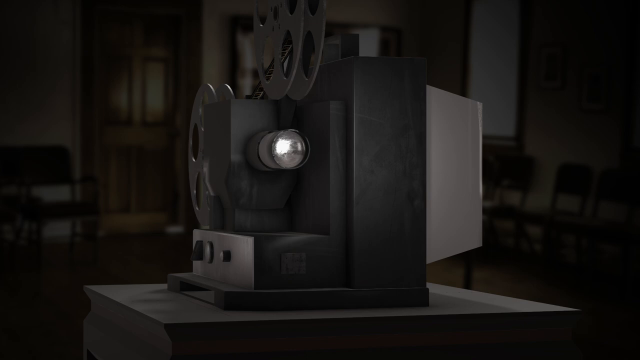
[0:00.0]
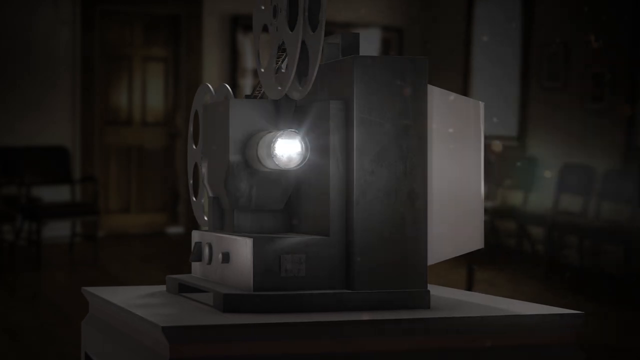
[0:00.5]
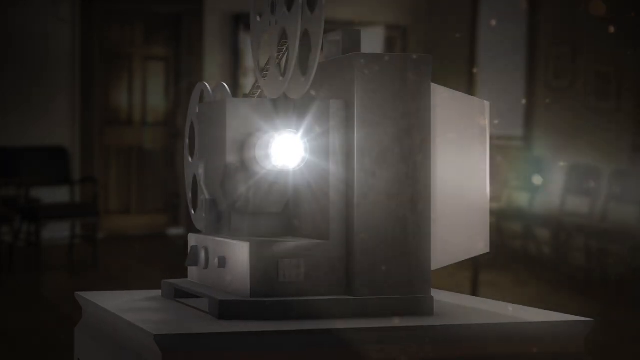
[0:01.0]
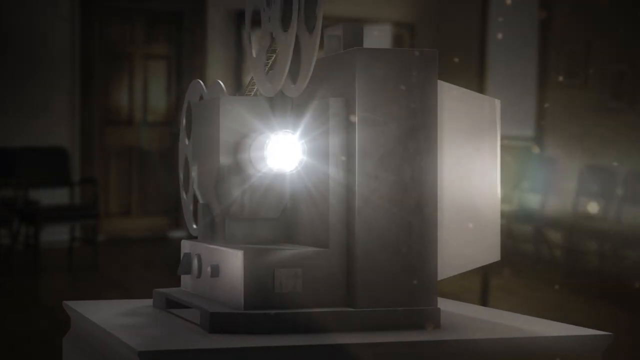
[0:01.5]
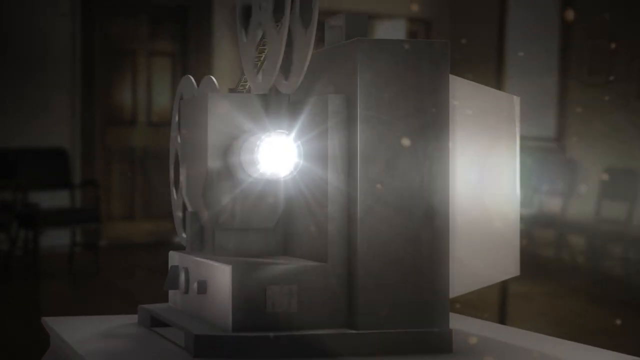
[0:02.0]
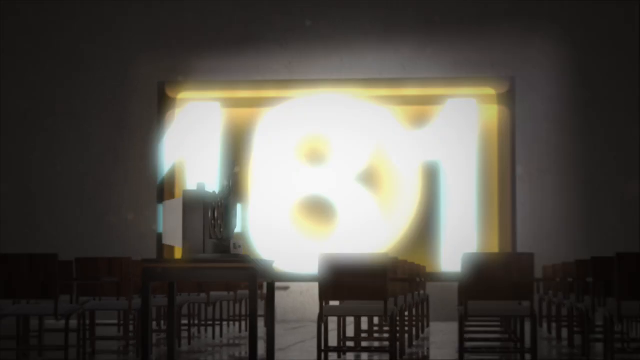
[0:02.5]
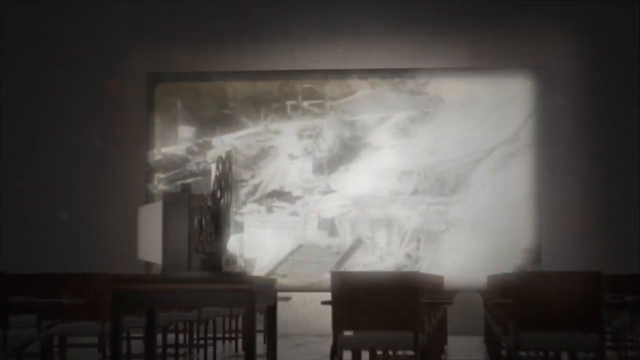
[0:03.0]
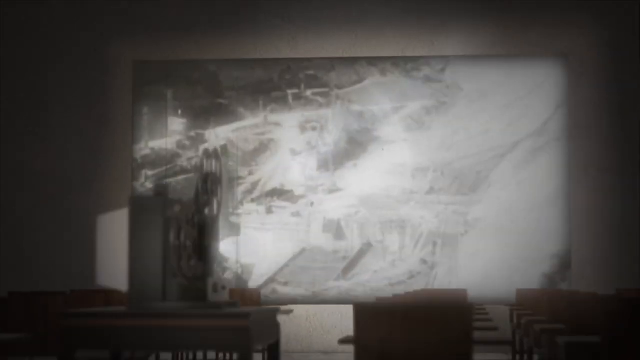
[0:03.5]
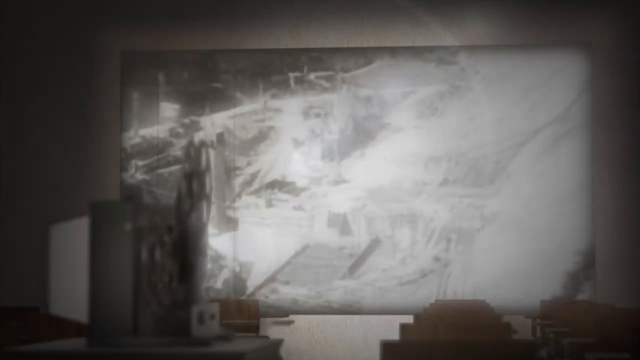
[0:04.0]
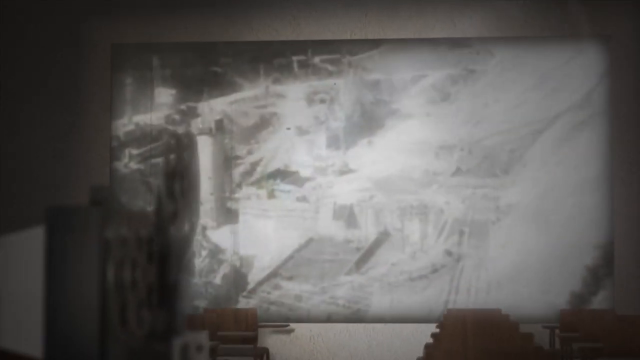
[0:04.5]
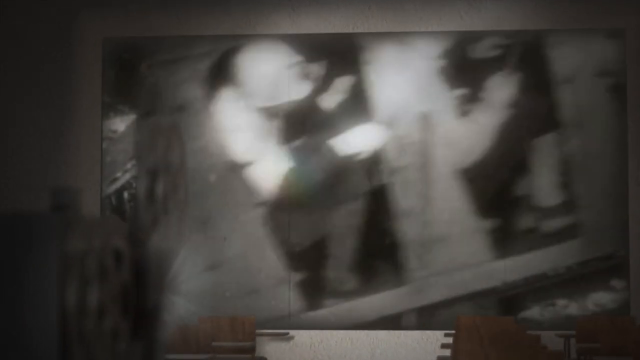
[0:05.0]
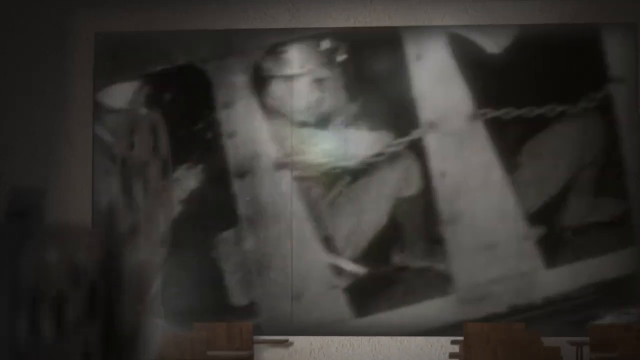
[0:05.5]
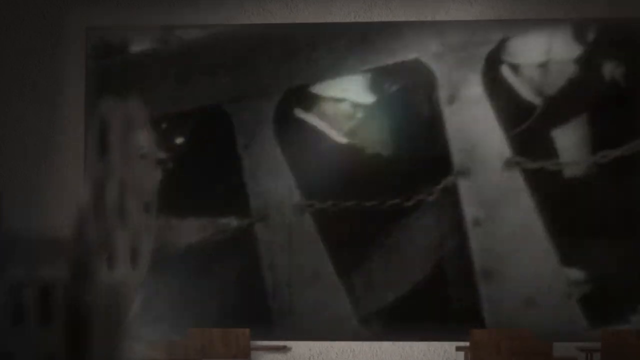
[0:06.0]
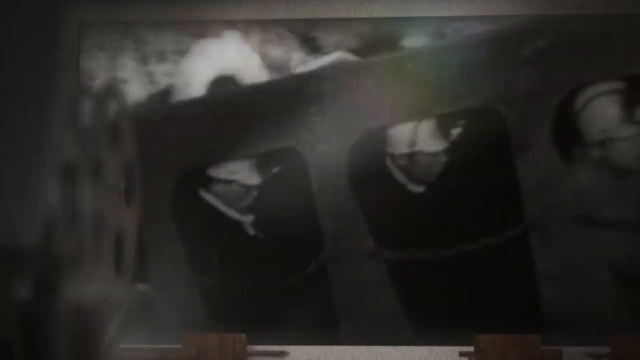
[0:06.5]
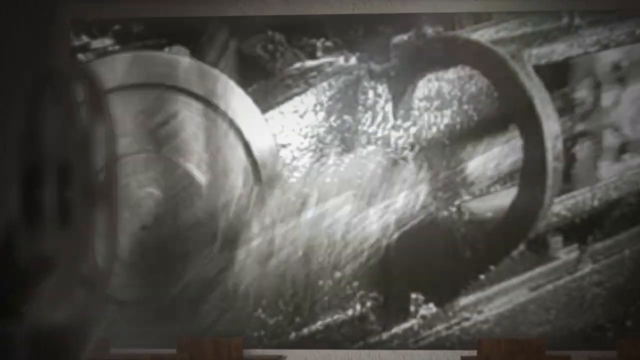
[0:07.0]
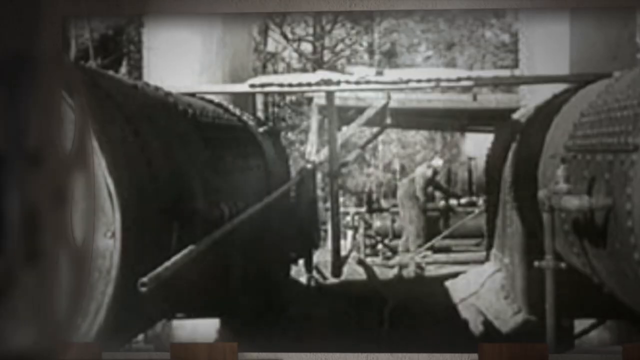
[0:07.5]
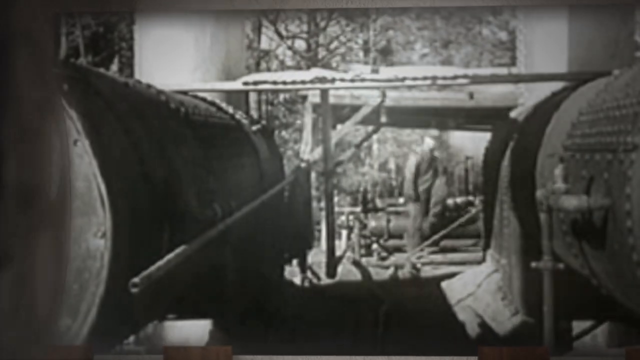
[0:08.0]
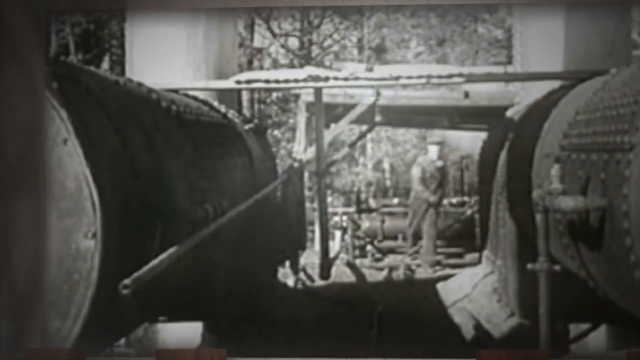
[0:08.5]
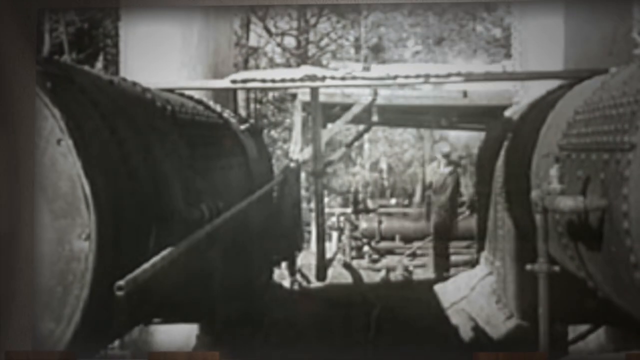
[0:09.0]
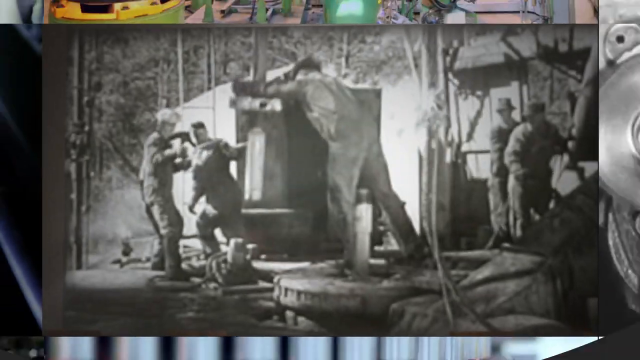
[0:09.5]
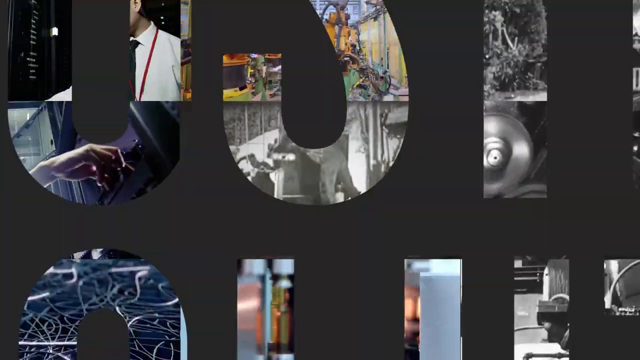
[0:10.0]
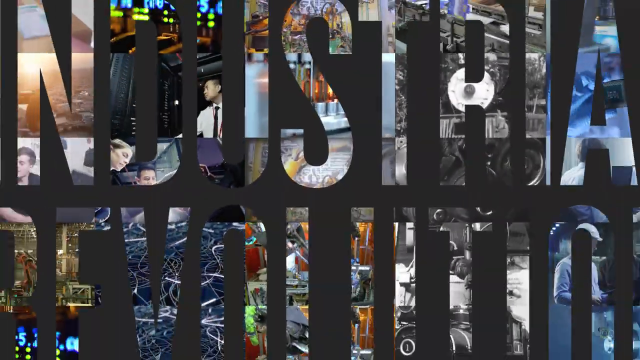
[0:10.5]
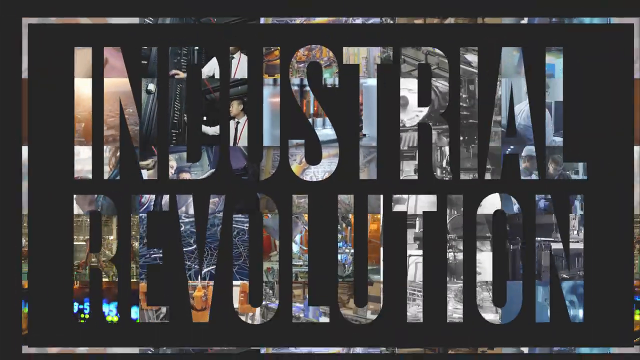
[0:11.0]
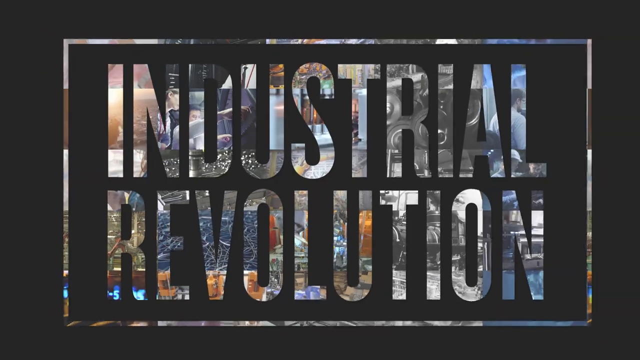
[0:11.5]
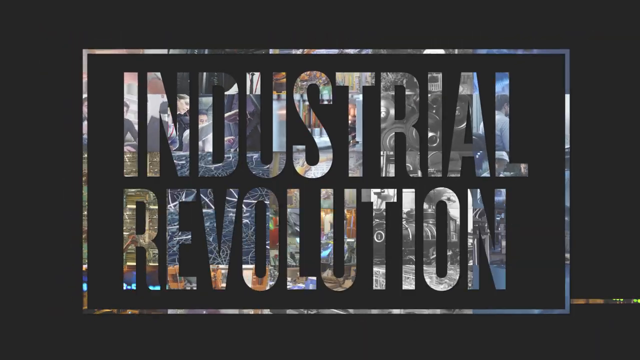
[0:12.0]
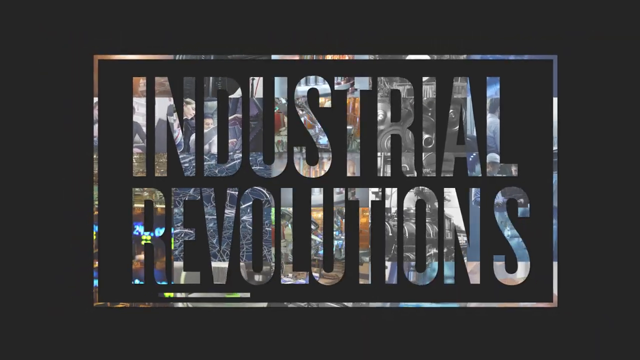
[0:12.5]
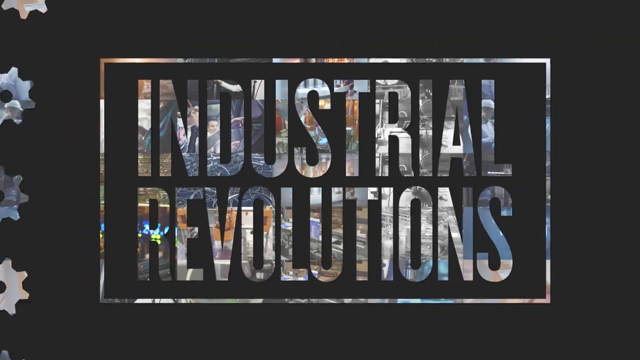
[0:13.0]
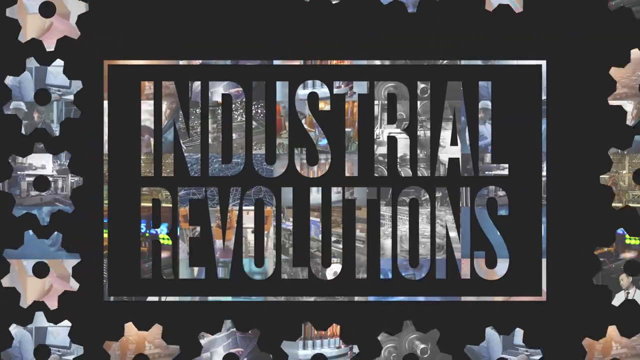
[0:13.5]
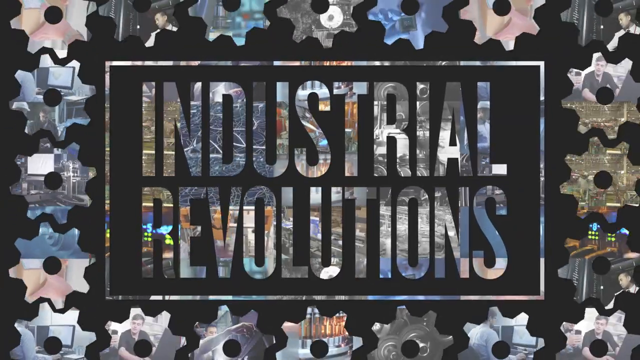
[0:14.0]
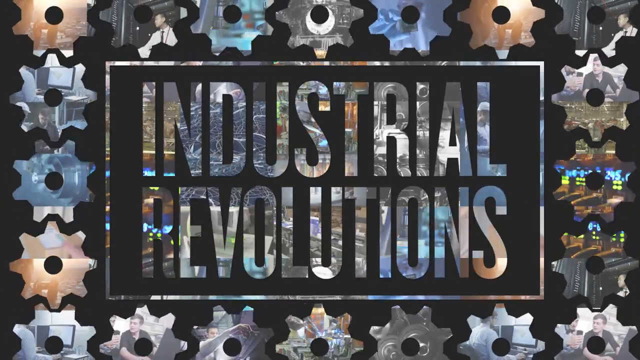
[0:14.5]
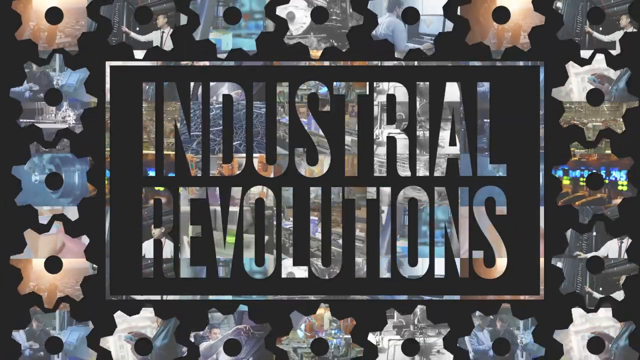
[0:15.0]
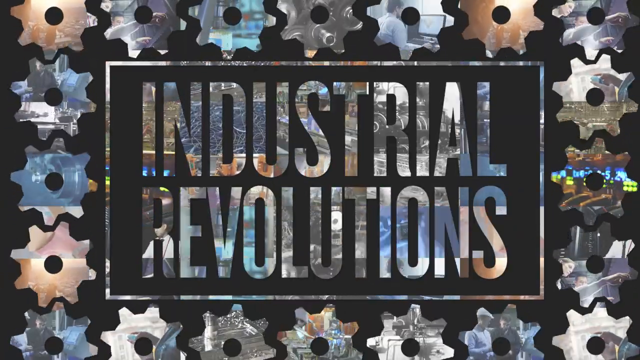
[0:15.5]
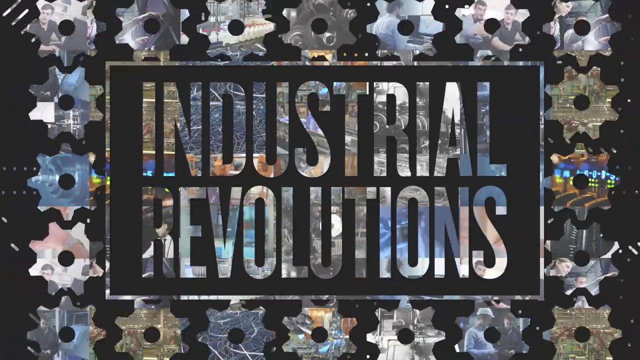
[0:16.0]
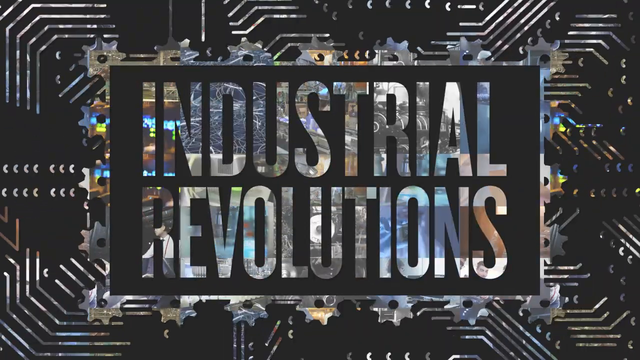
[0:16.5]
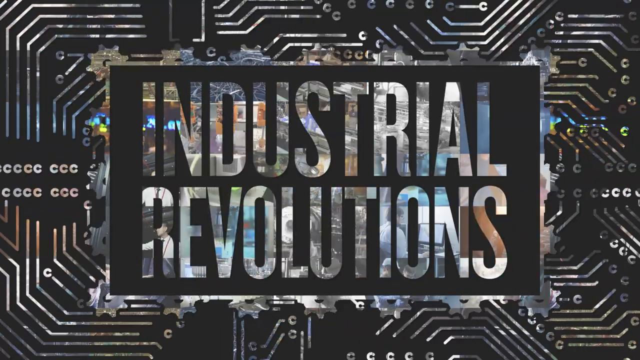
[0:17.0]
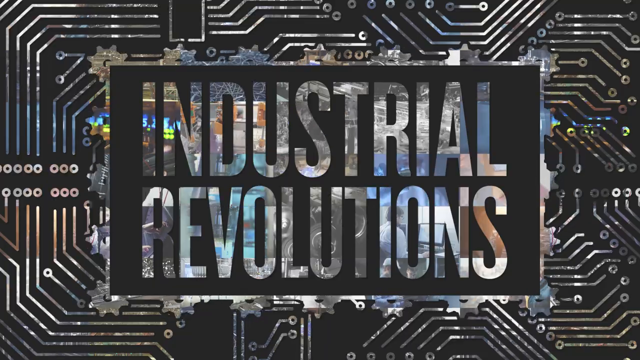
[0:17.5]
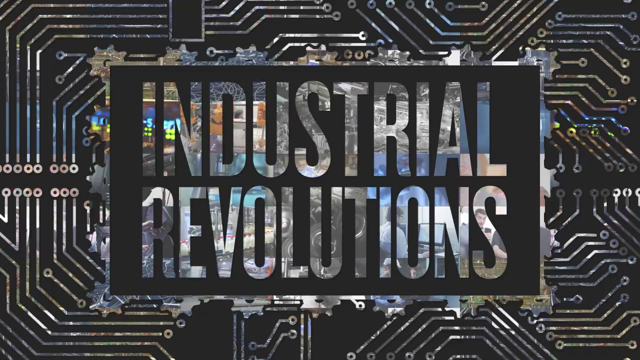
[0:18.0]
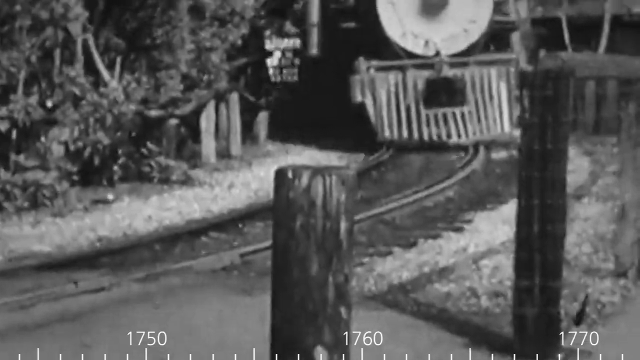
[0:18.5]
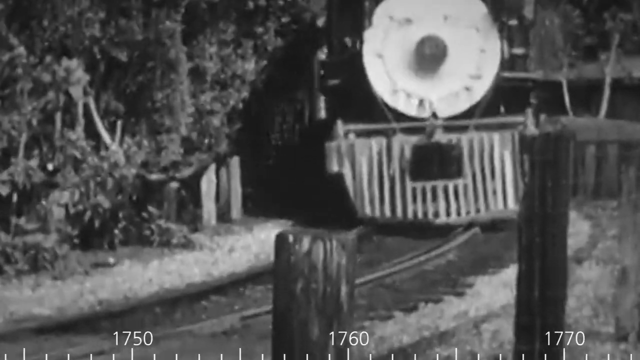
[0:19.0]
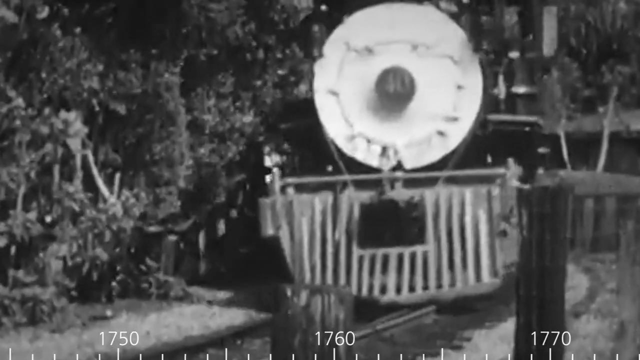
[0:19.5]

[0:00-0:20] The recording looks mostly black and white. It opens on an old-fashioned projector screen sitting on a table, with some light coming from the lens. The light gets brighter and shines on a screen on a wall in front of the projector. Moving closer to the projected screen, there is an image of what appear to be men in some sort of cage, wearing helmets on their heads. Some machinery moves along, and then larger cylinder-type items appear, with men in work hats between them. Most of the images are black and white. Then, on a black screen, the words "industrial revolutions" pop up.